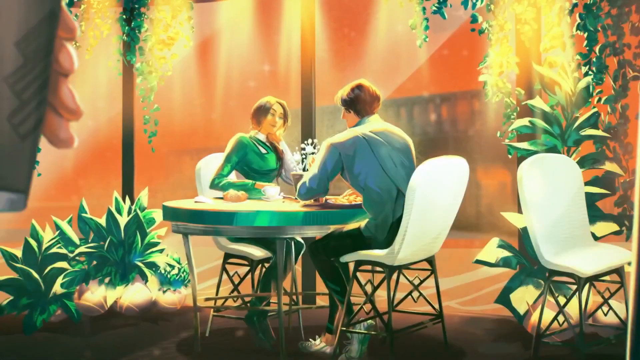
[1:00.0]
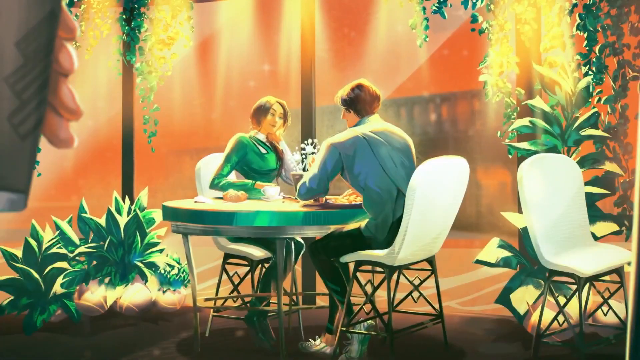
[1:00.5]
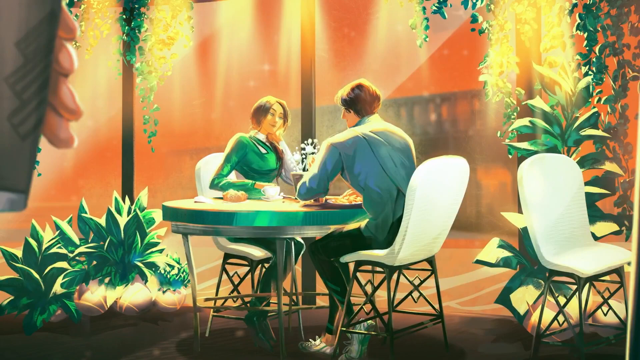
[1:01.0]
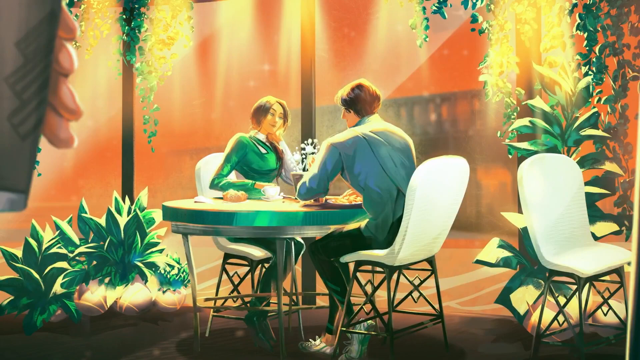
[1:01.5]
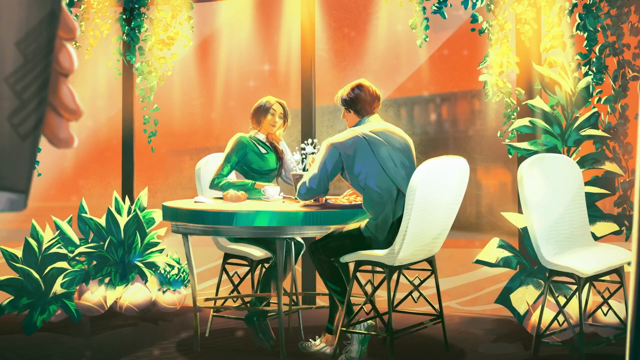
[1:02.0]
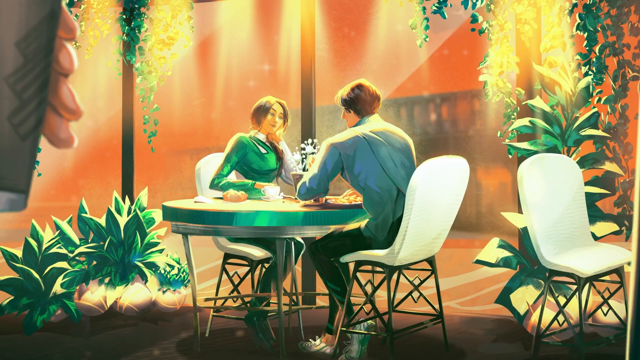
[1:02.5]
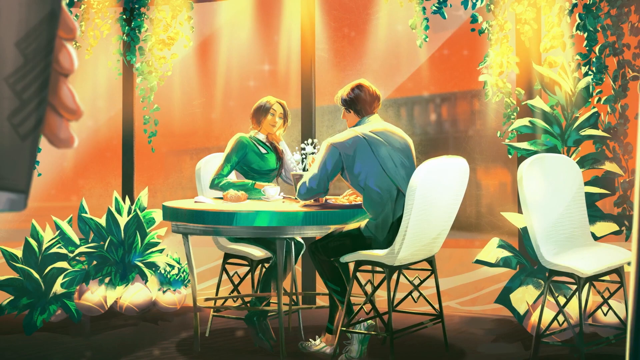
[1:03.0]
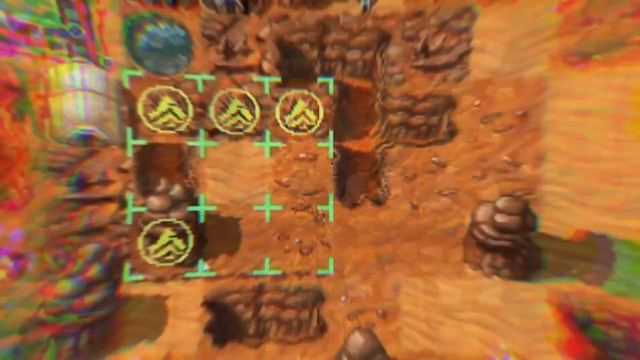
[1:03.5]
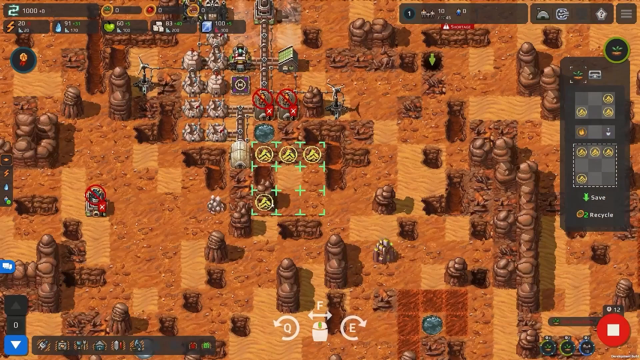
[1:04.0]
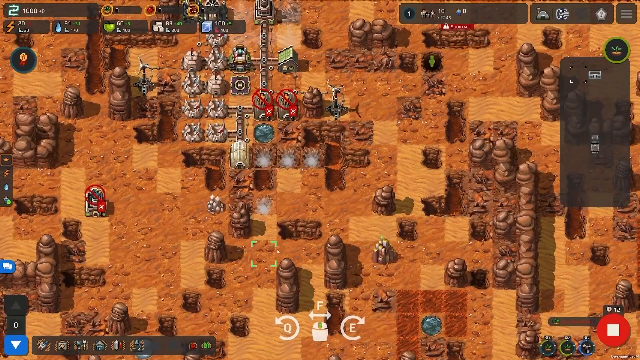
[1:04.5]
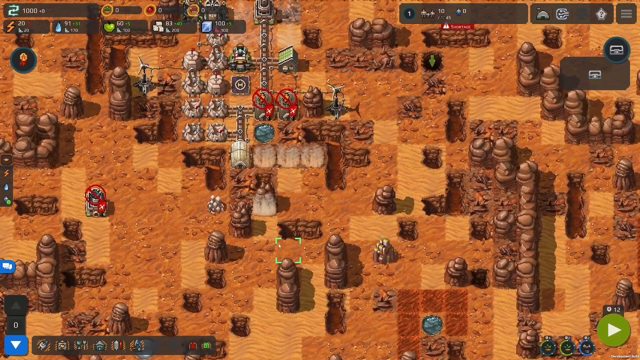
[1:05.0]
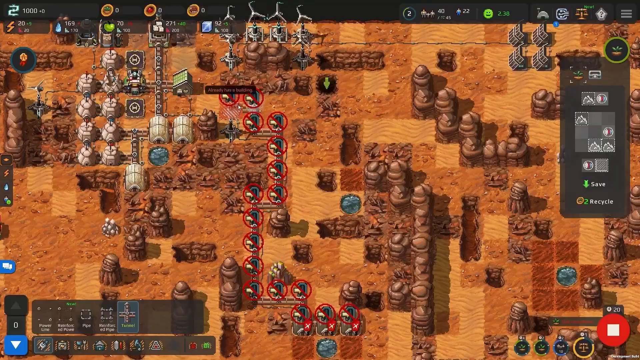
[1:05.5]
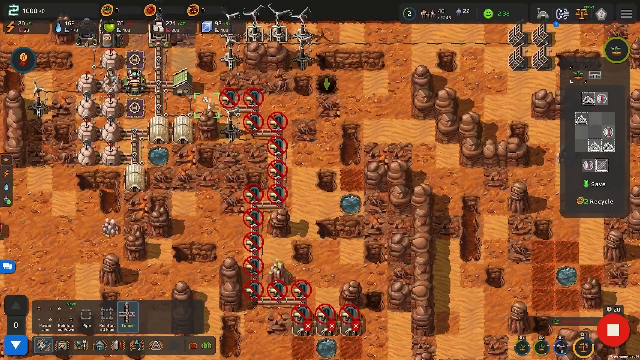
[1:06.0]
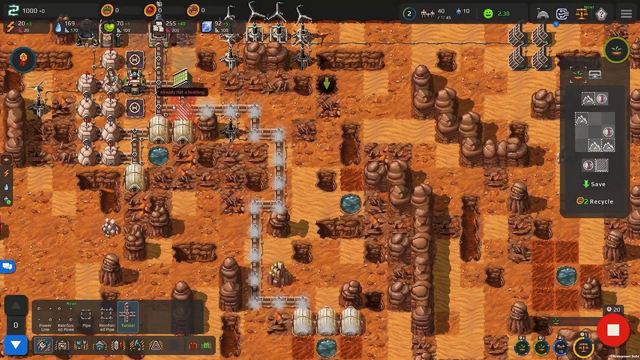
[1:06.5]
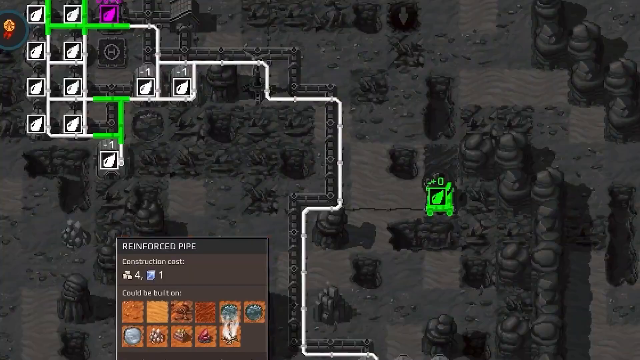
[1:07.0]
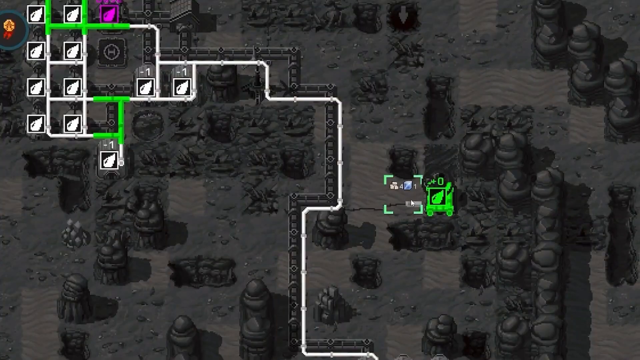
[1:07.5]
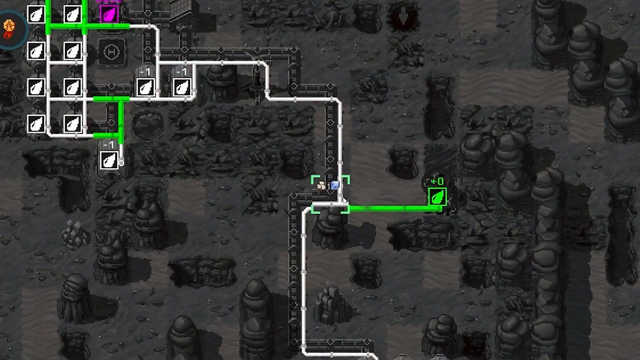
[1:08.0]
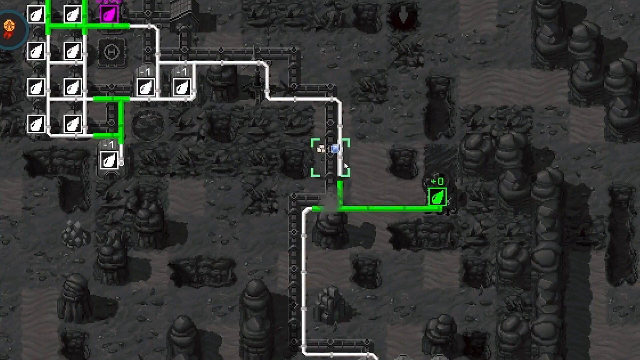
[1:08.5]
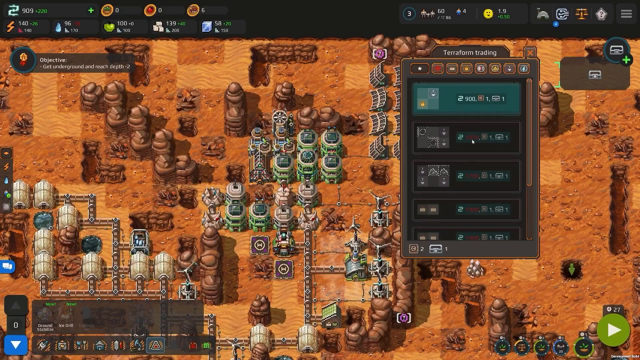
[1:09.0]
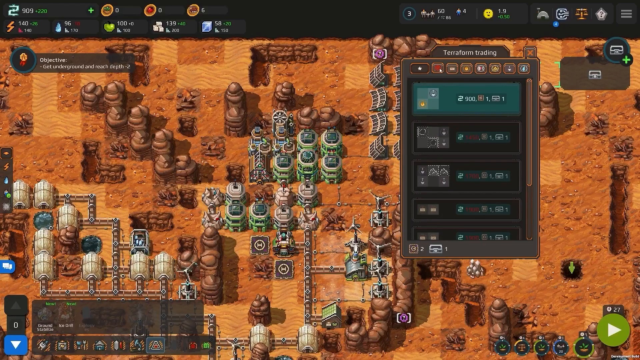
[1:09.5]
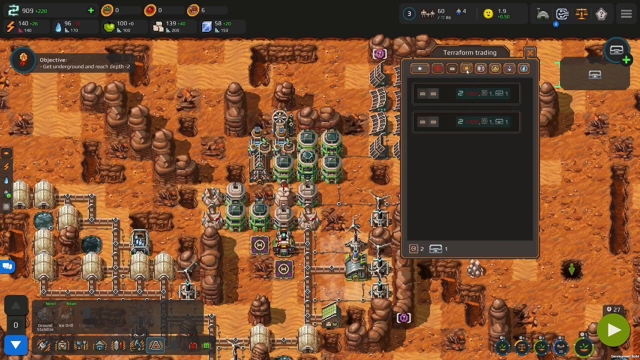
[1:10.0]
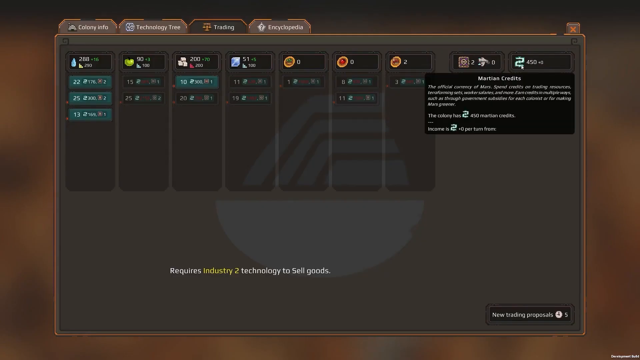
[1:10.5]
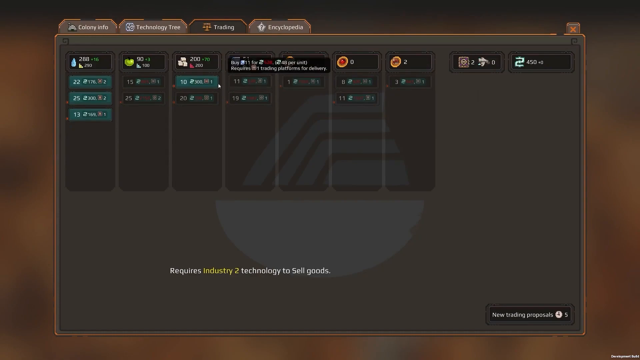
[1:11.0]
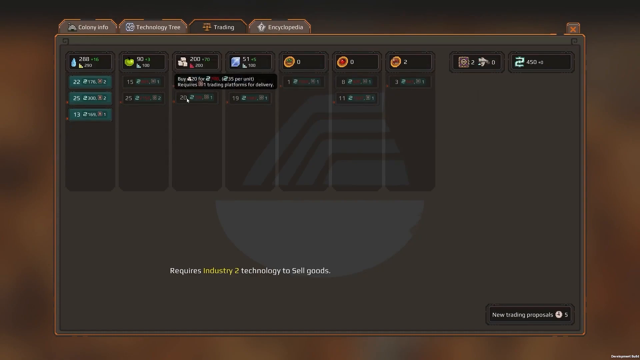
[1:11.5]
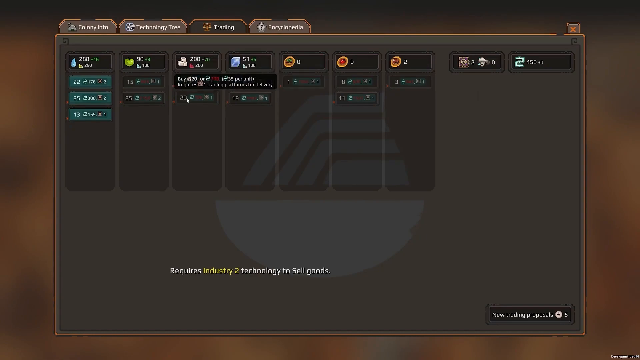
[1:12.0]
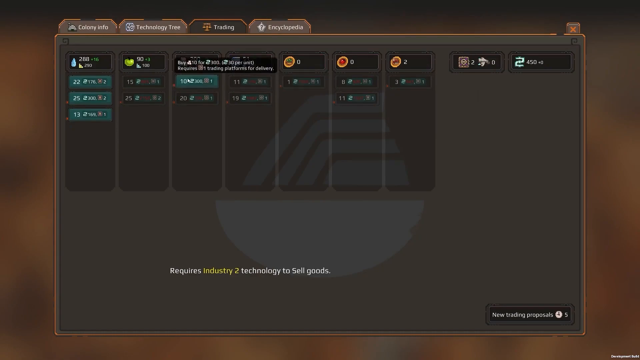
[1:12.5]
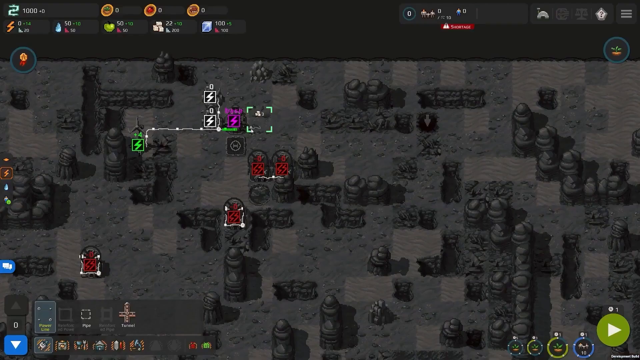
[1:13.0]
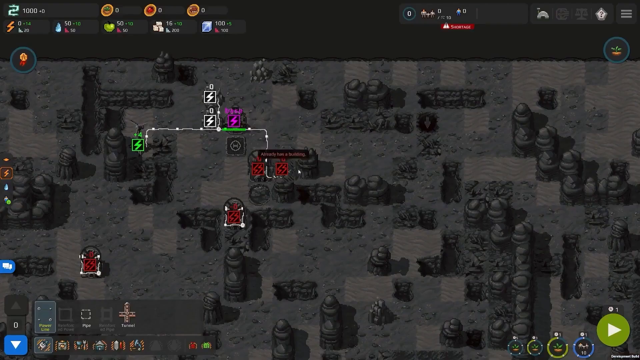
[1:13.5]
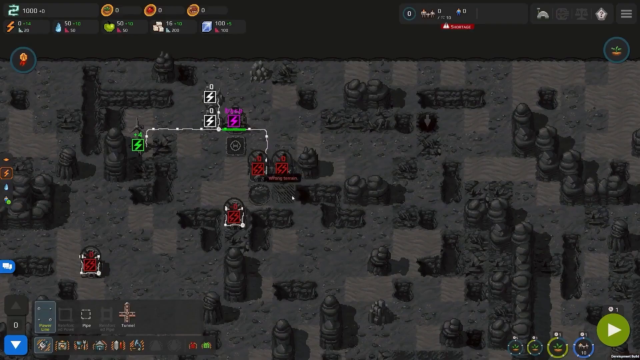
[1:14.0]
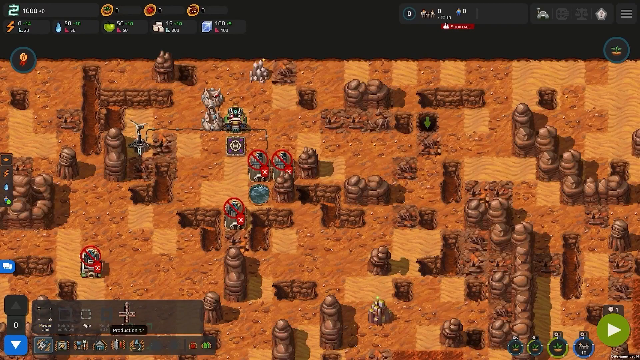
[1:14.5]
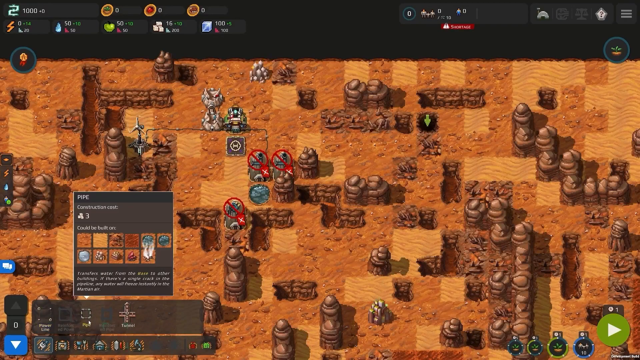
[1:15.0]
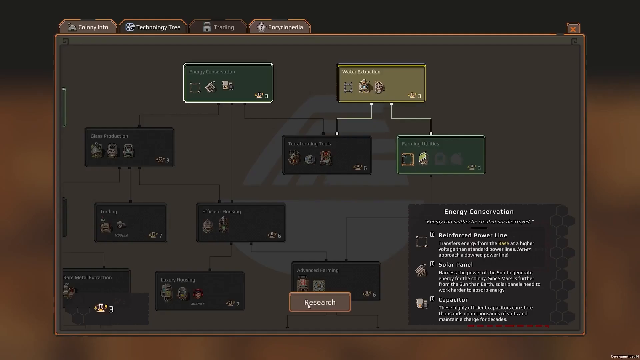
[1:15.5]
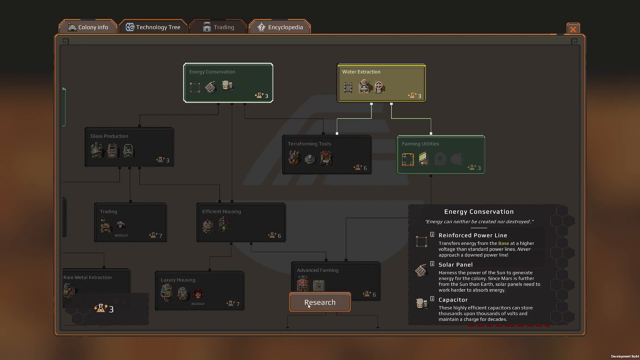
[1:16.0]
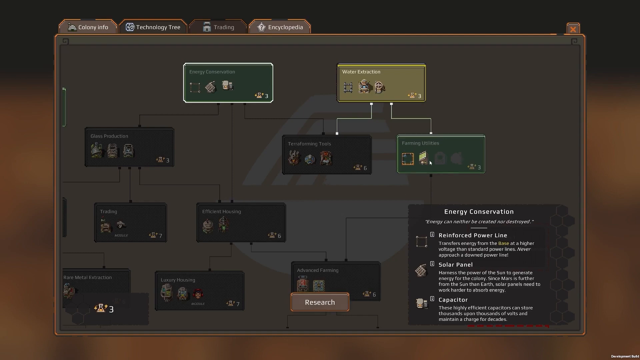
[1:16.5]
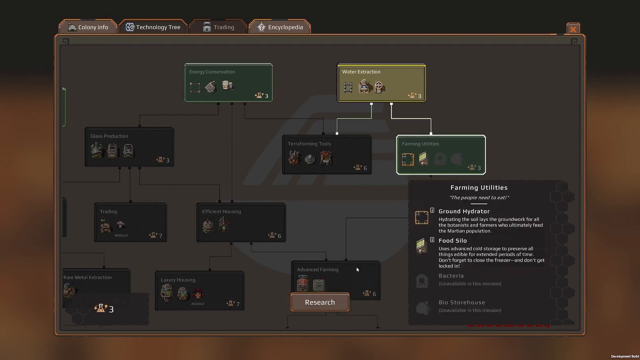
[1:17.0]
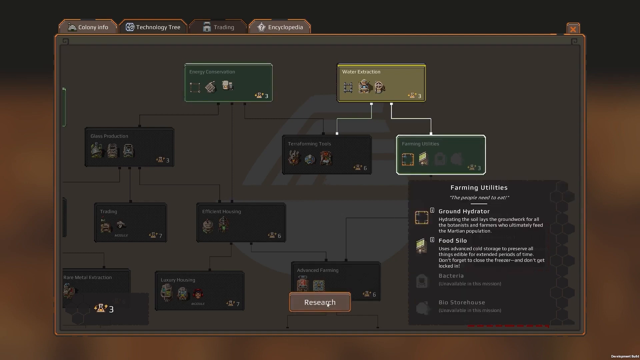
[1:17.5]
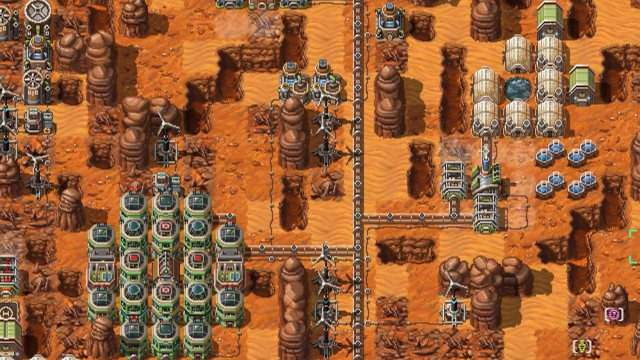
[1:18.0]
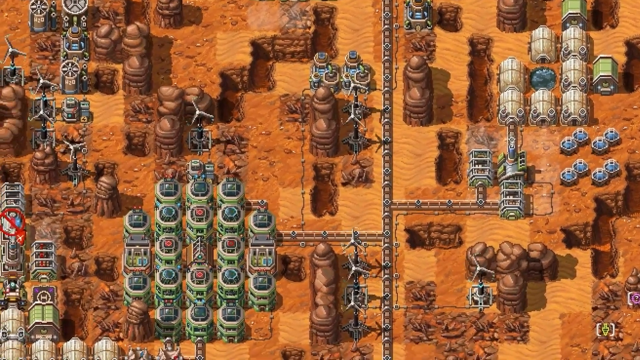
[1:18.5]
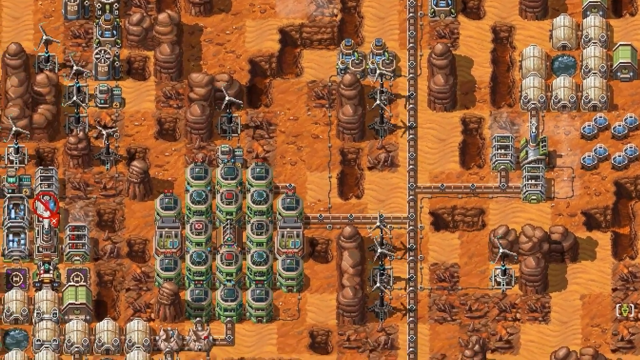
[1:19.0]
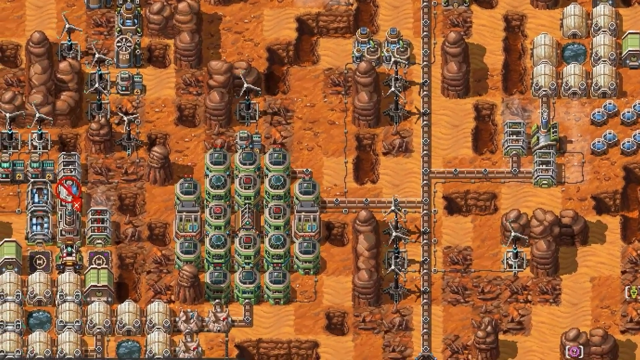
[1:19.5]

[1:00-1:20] A cutscene plays showing a man and a woman at a table. It barely moves, like a slideshow. The woman is looking at the man, with her hand around her neck somewhat as if wiping something off. They sit at a green table with white chairs and a couple of plants around them, overlooking what is apparently the planet through the windows. Another empty white chair is behind them. The video then shows the player wiring something that looks like food, with an icon that looks kind of like a leaf, in what seems to be the same kind of menu as the electricity one. The player then brings up a more in-depth version of a menu seen earlier. In the trading tree, 10 of something, possibly the salt, can be bought for 300 credits, requiring one trading platform for delivery.